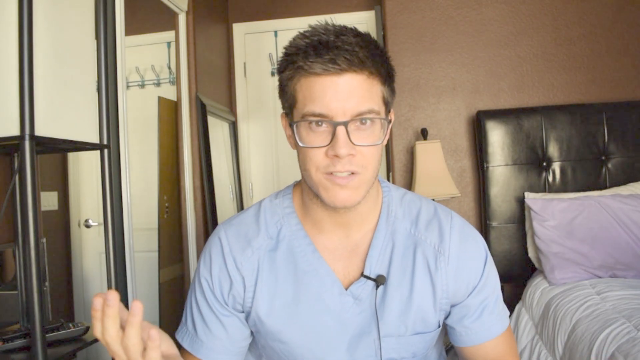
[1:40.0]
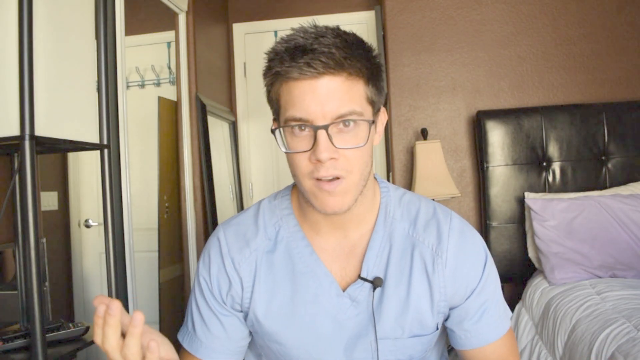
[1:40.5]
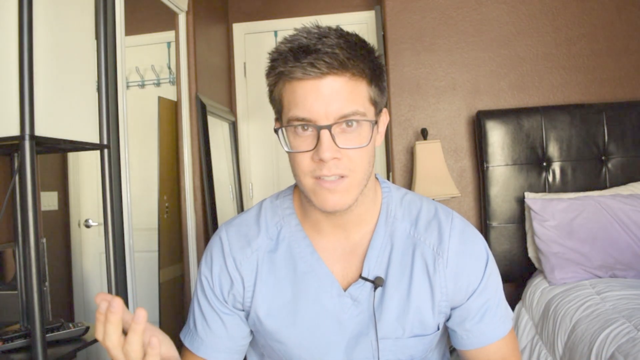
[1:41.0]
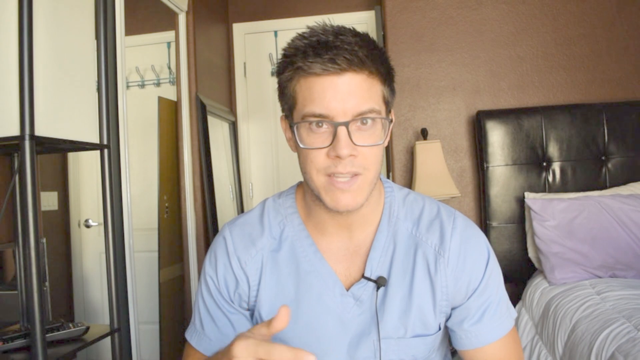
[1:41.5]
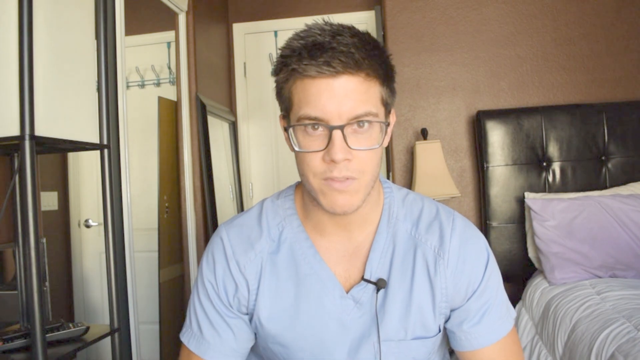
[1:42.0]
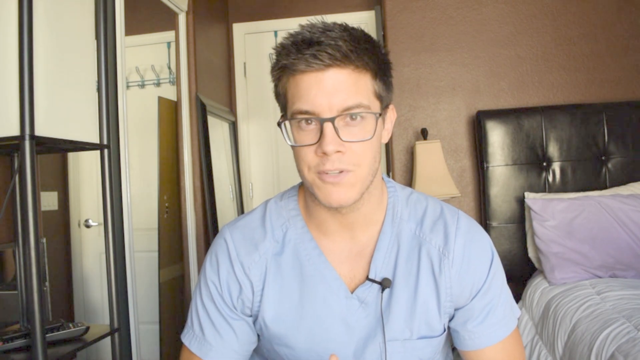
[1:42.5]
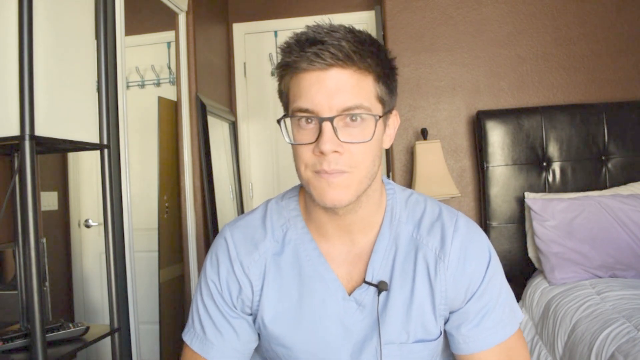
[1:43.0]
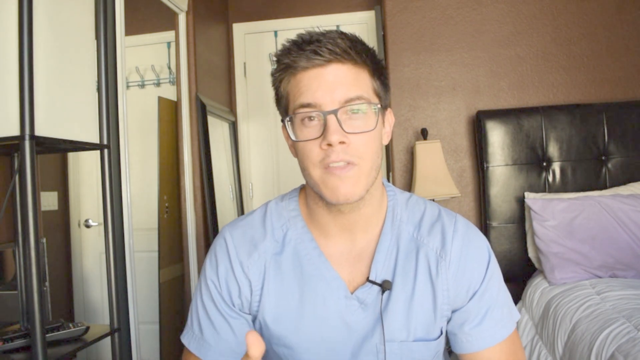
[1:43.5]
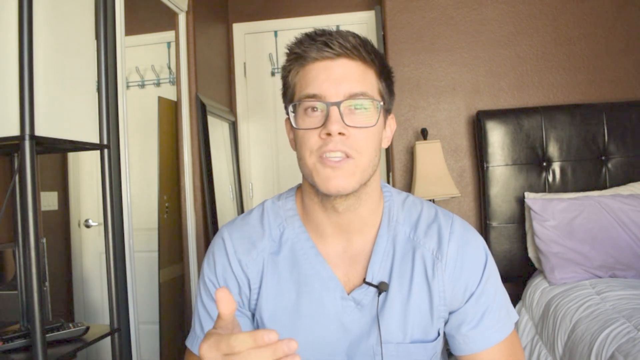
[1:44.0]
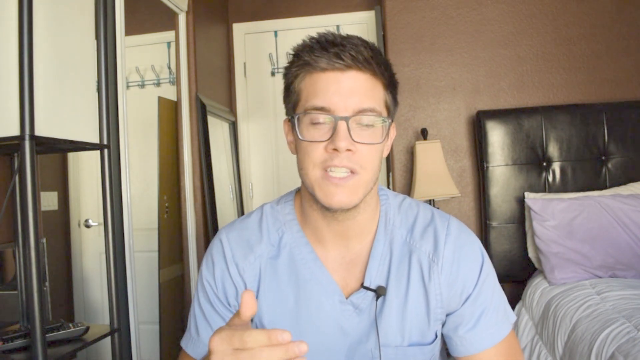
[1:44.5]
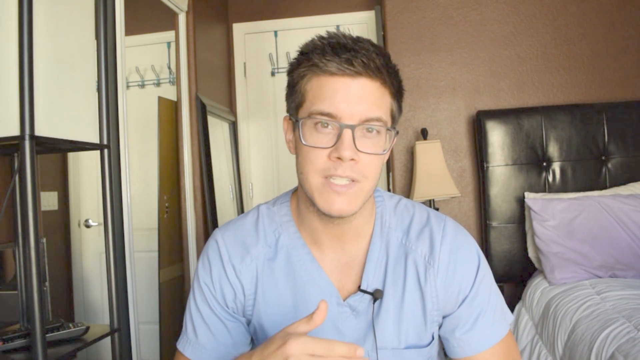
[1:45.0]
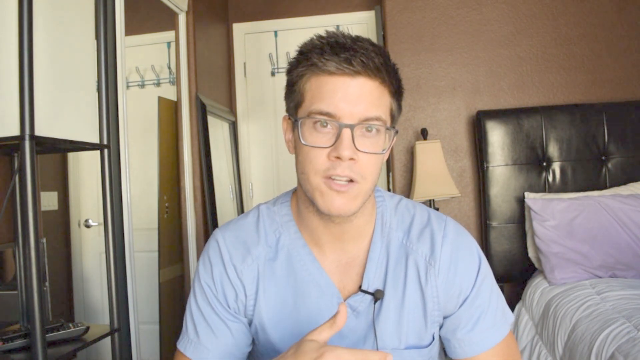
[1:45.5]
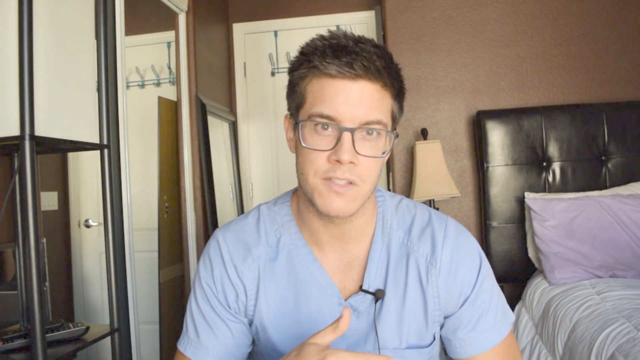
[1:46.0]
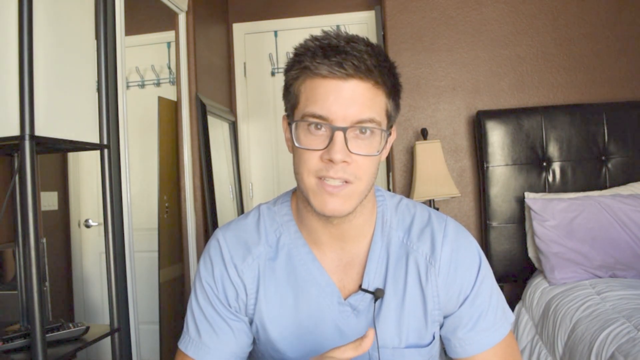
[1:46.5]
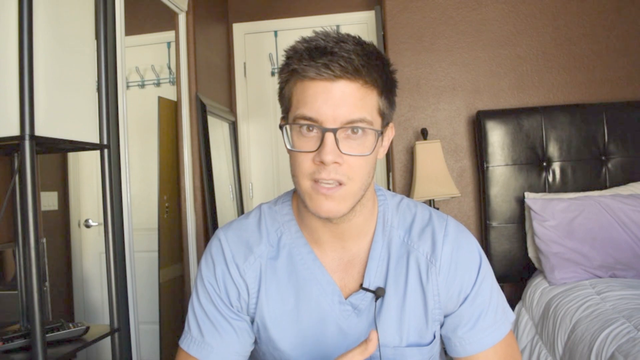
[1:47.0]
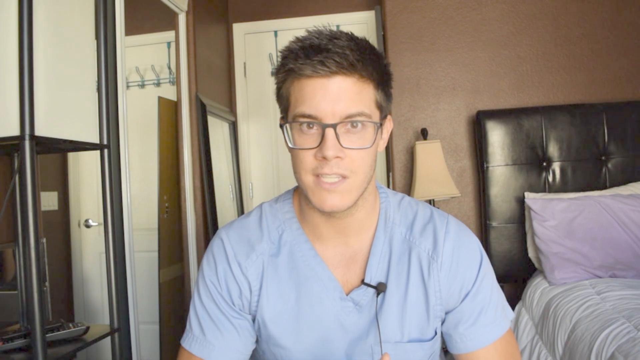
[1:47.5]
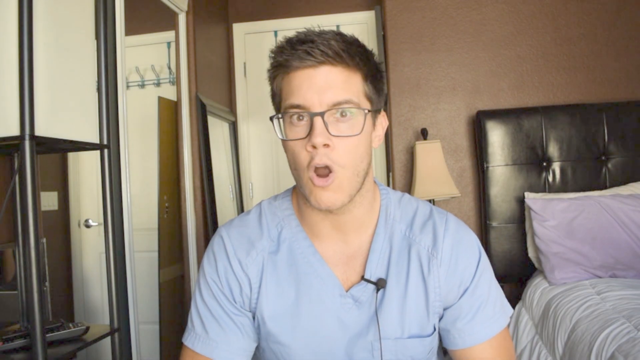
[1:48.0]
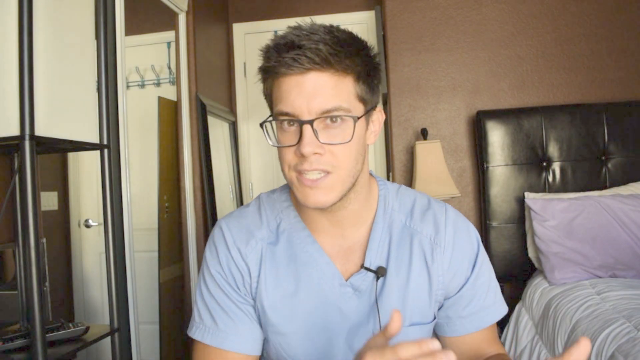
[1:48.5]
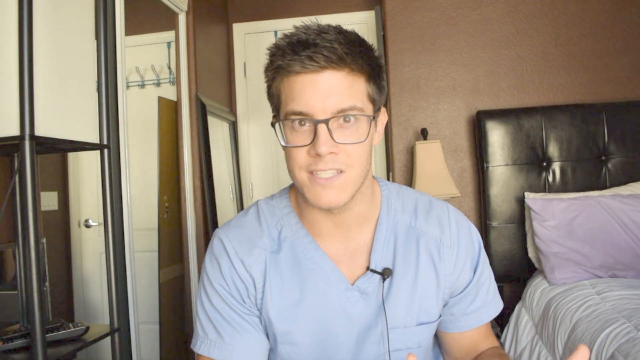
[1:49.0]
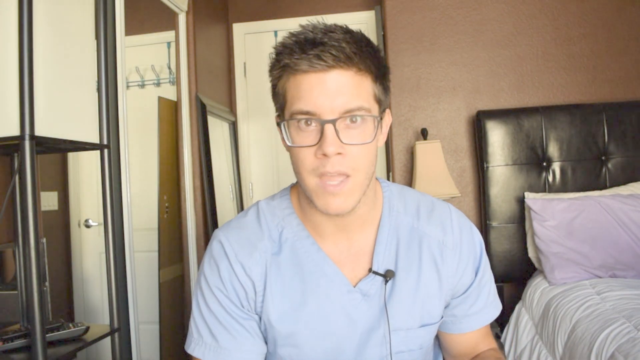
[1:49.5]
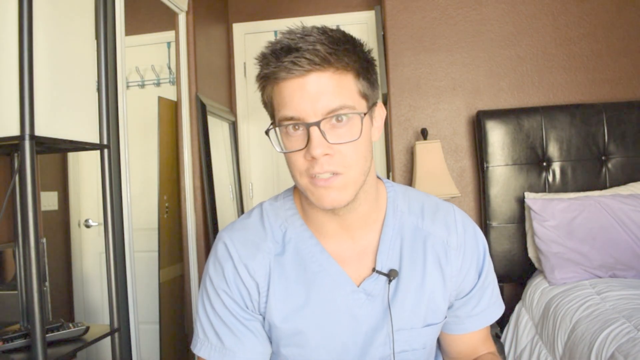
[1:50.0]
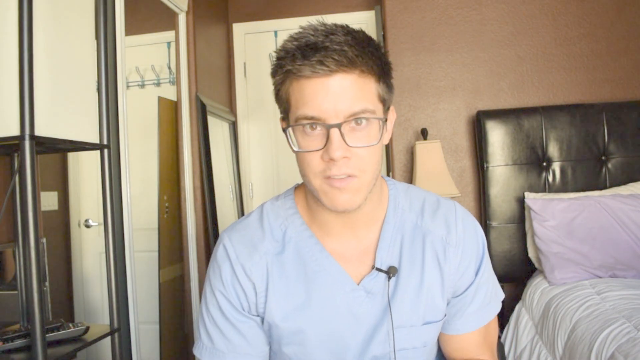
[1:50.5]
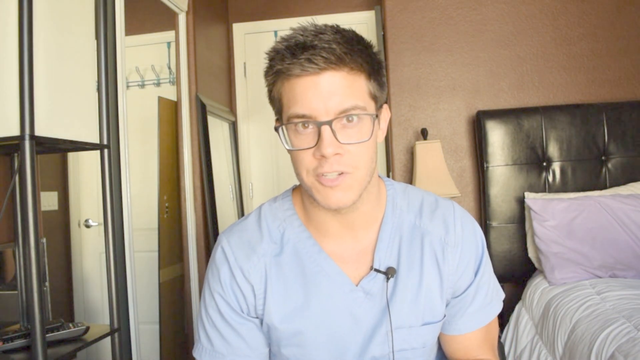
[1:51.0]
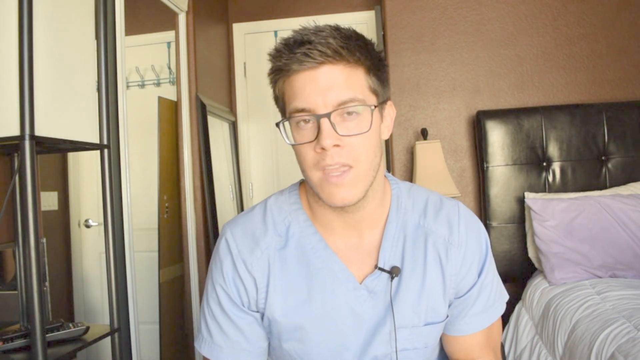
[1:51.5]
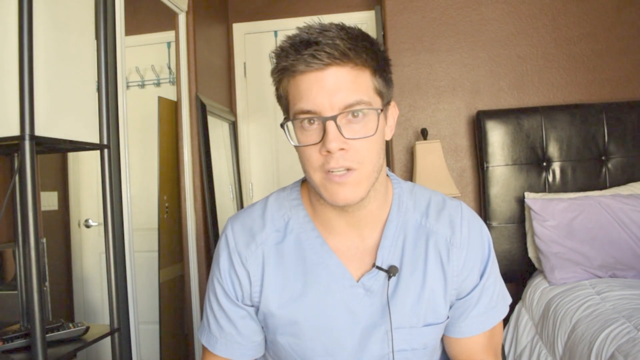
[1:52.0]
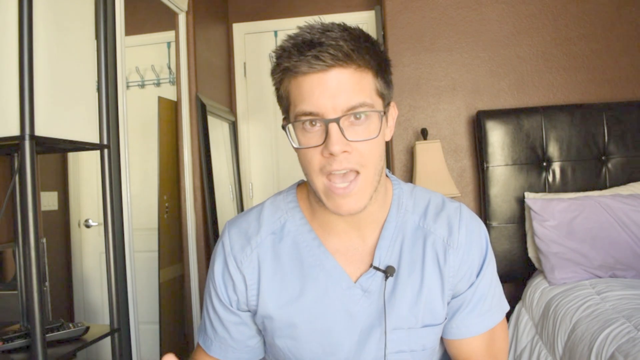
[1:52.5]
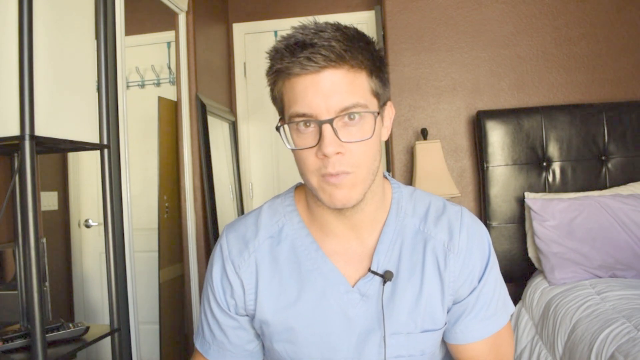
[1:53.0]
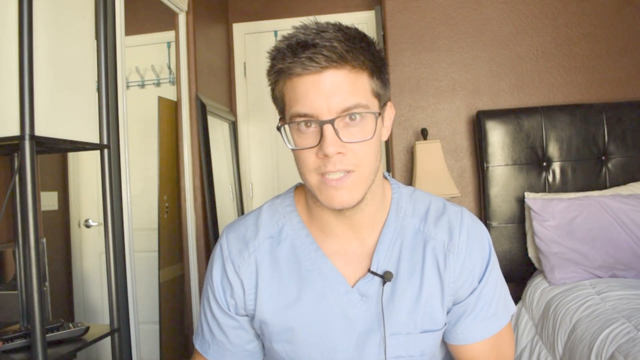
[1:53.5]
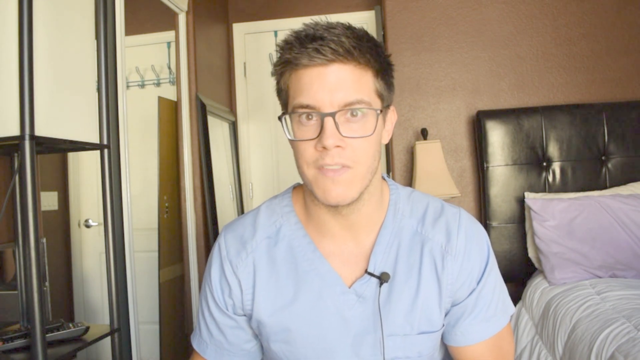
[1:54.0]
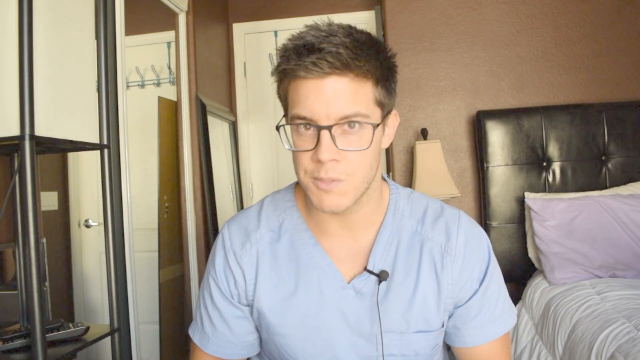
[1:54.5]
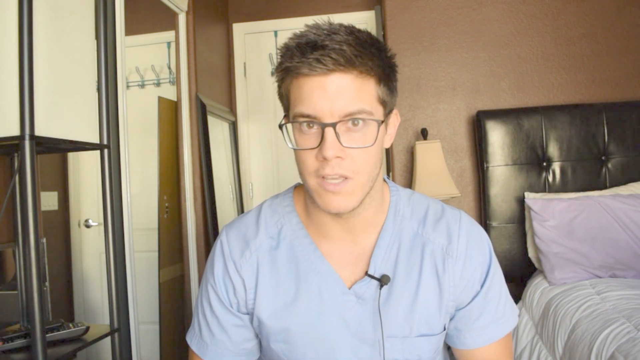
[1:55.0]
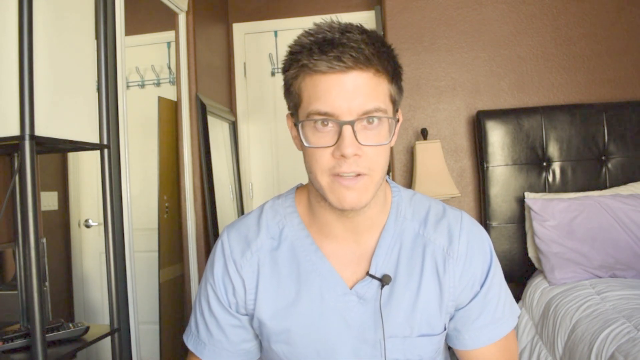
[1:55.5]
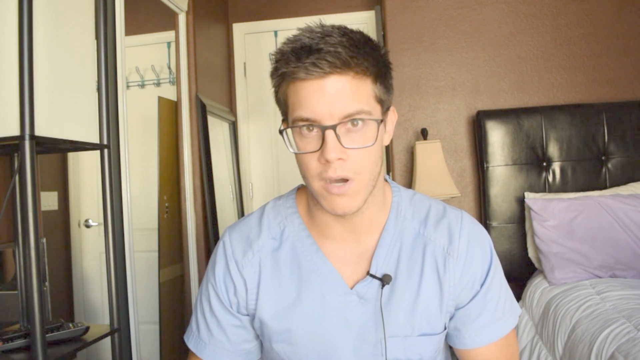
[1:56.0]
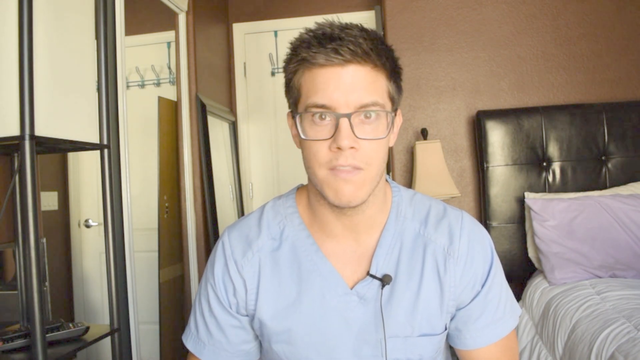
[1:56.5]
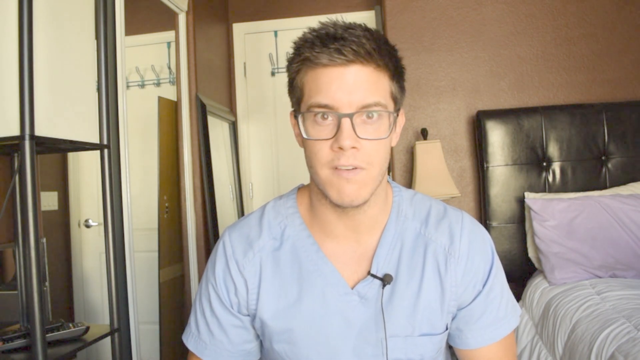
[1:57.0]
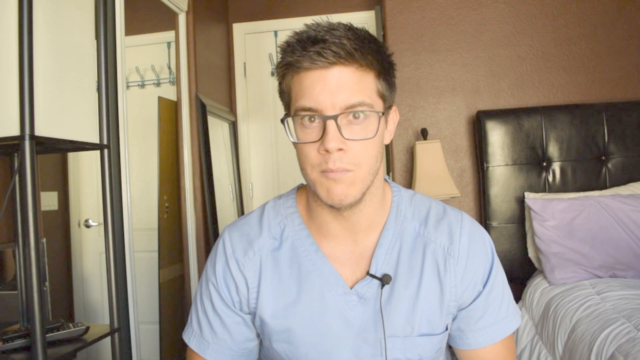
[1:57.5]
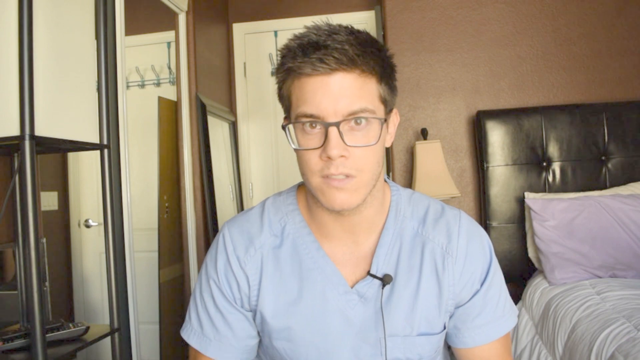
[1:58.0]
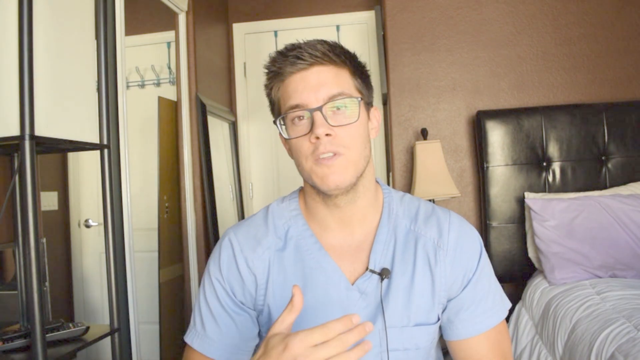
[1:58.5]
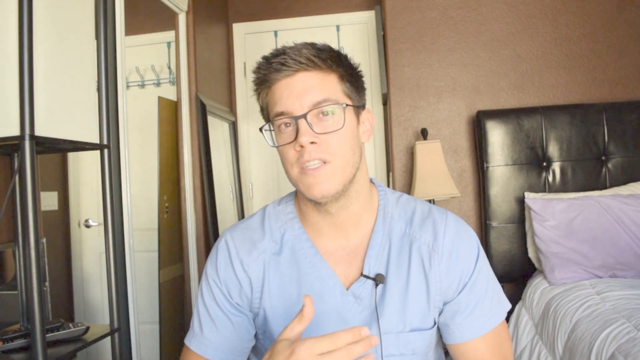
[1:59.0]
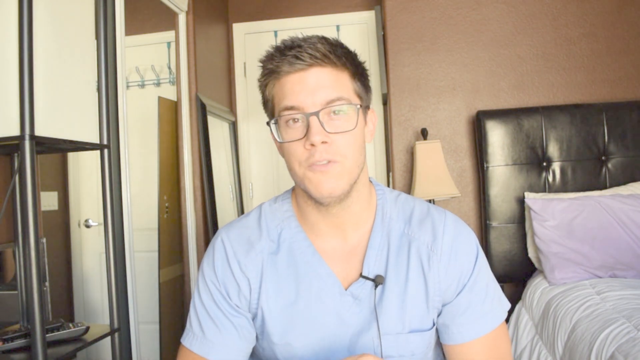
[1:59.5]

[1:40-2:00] The boy continues talking. In the background there is a bed and a lamp, along with the boy. The person is discussing, or in class, and is also writing something that seems to be a medical professional's brief.